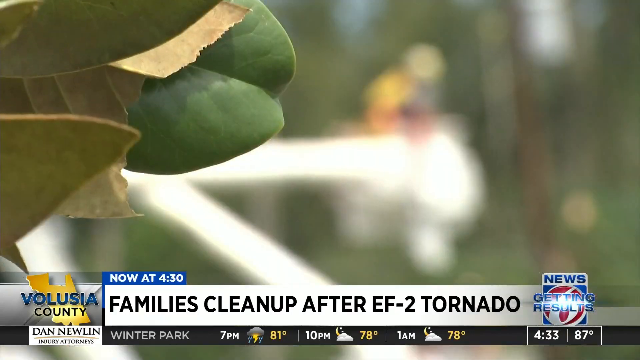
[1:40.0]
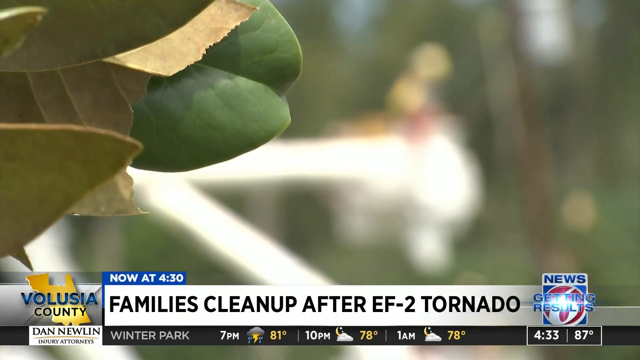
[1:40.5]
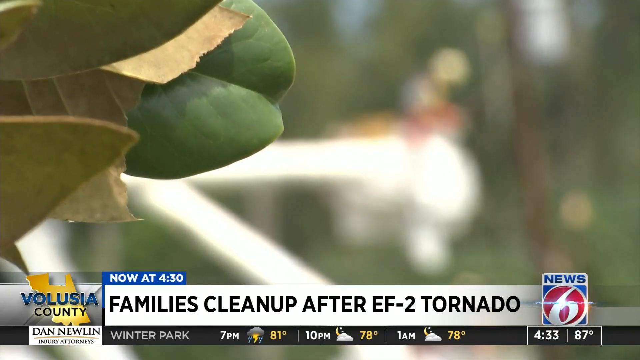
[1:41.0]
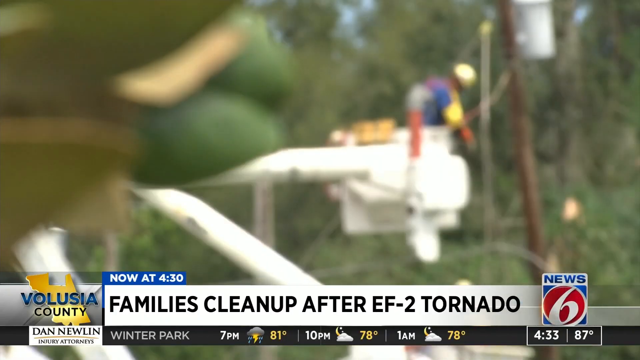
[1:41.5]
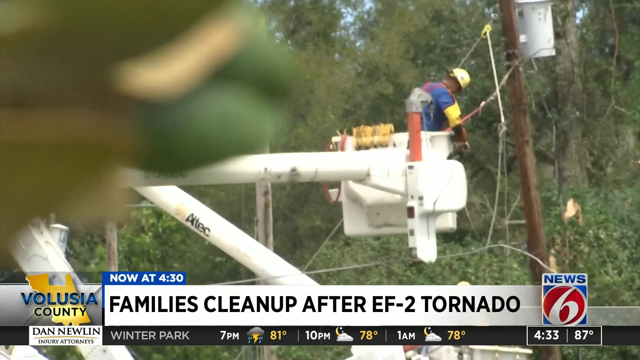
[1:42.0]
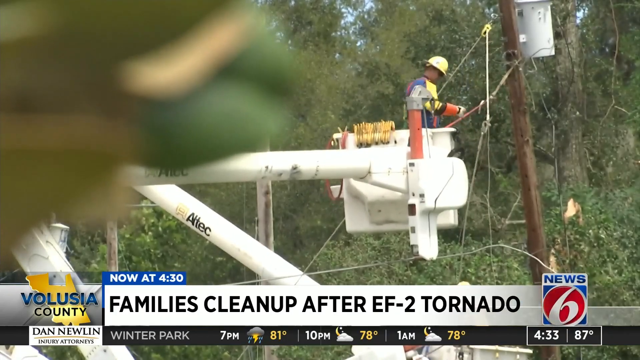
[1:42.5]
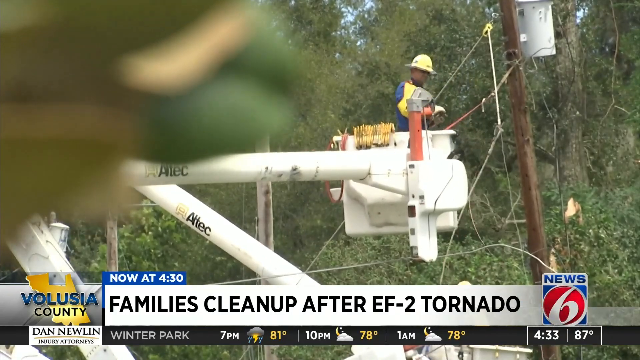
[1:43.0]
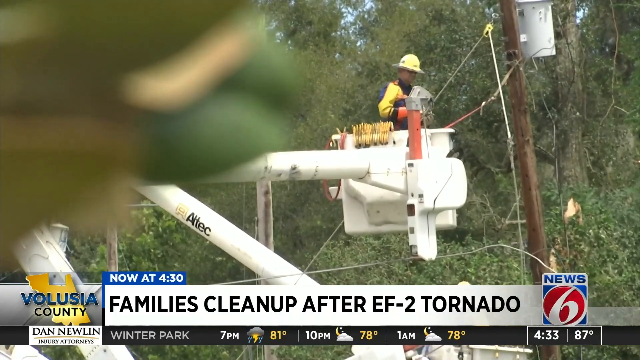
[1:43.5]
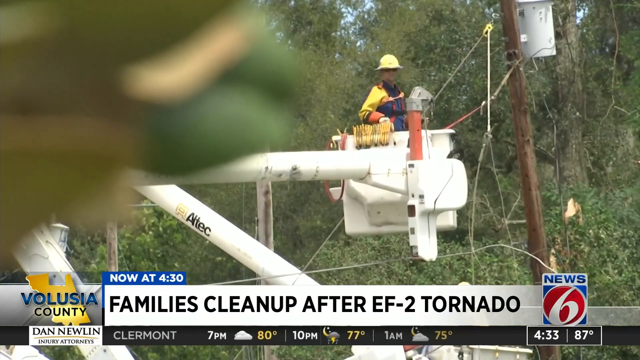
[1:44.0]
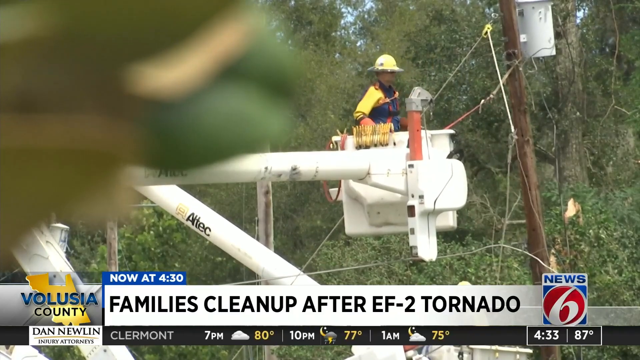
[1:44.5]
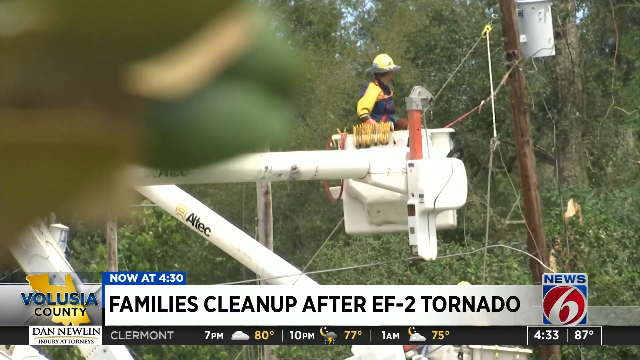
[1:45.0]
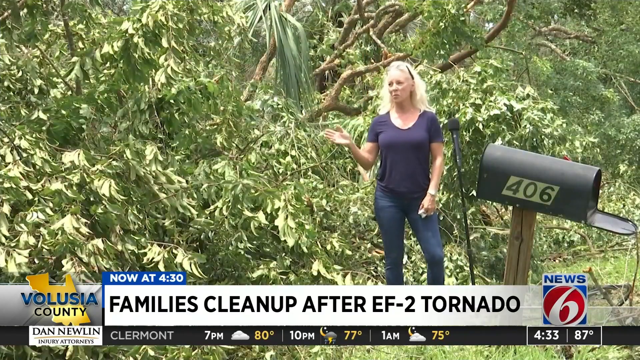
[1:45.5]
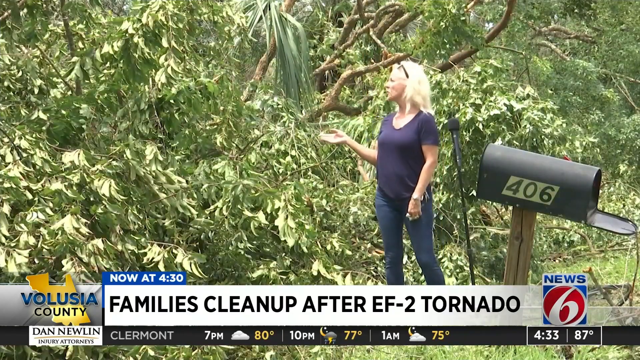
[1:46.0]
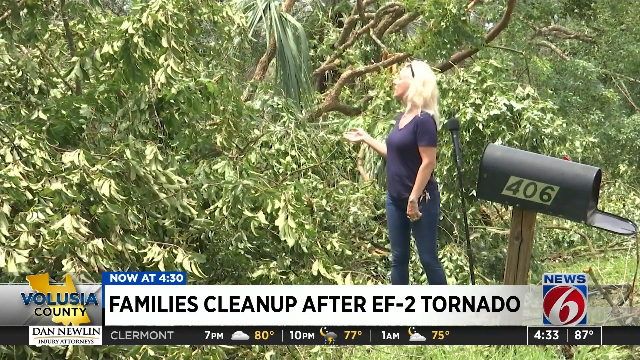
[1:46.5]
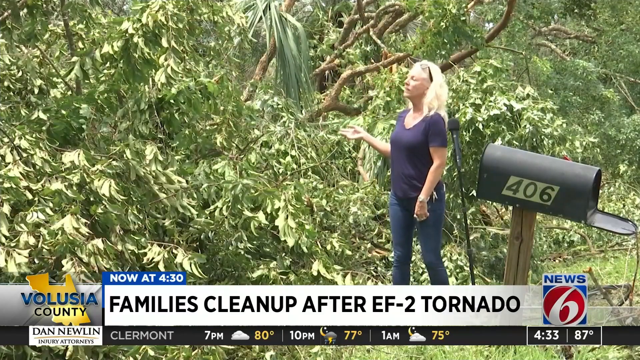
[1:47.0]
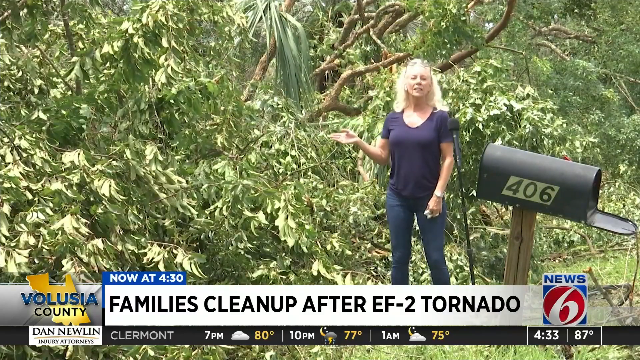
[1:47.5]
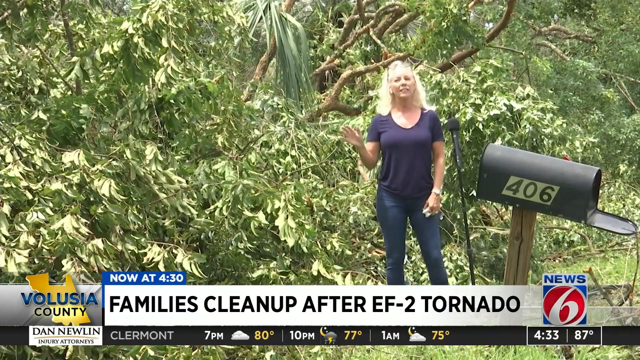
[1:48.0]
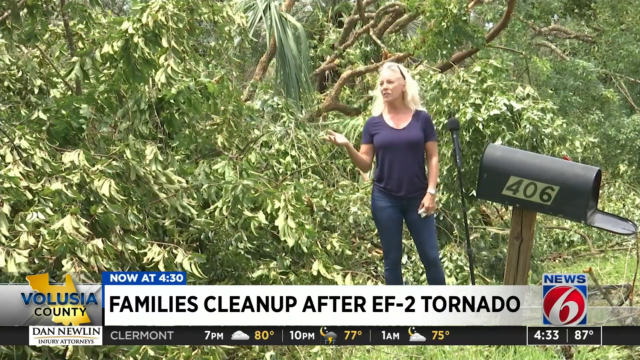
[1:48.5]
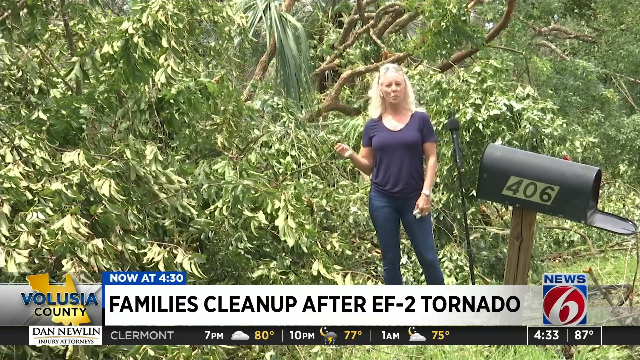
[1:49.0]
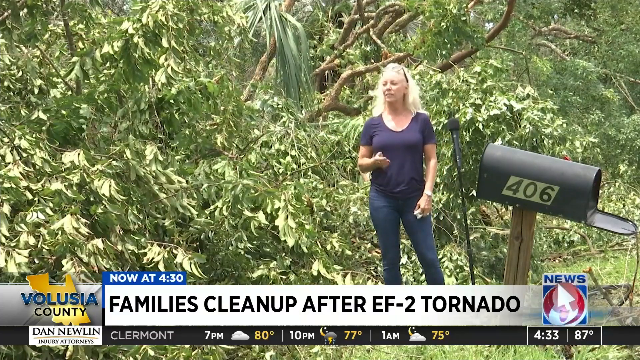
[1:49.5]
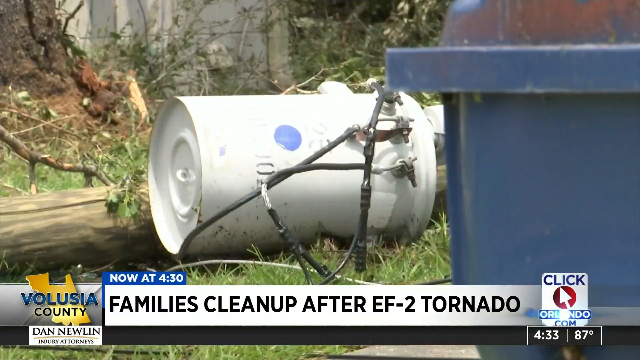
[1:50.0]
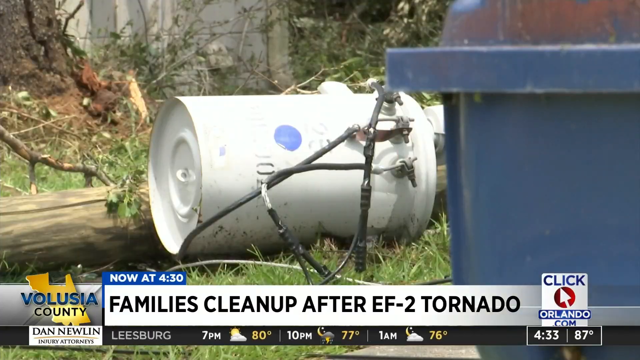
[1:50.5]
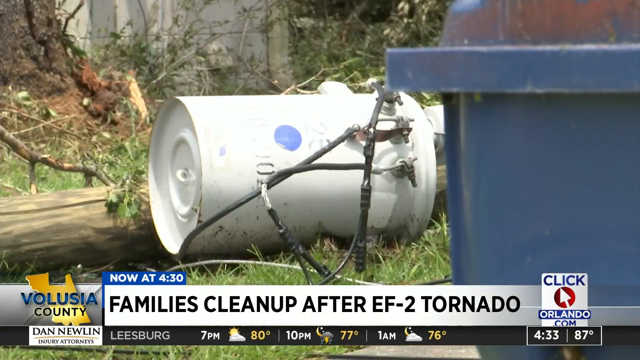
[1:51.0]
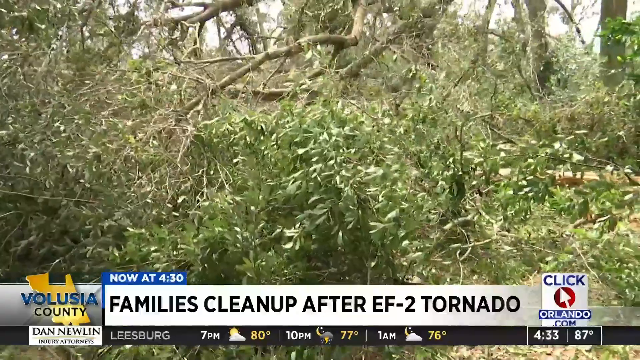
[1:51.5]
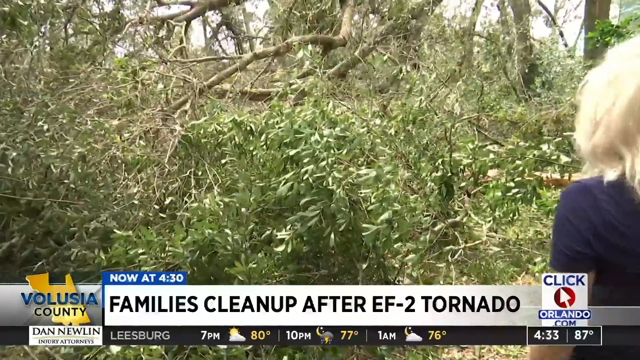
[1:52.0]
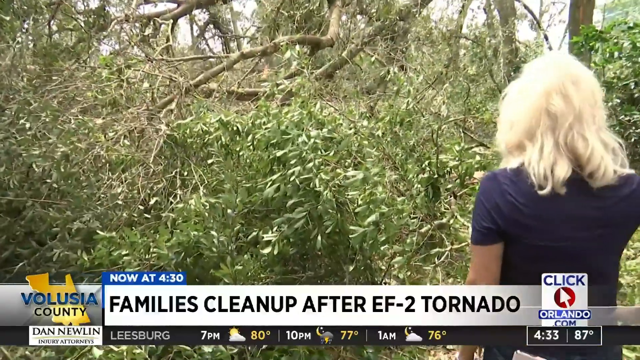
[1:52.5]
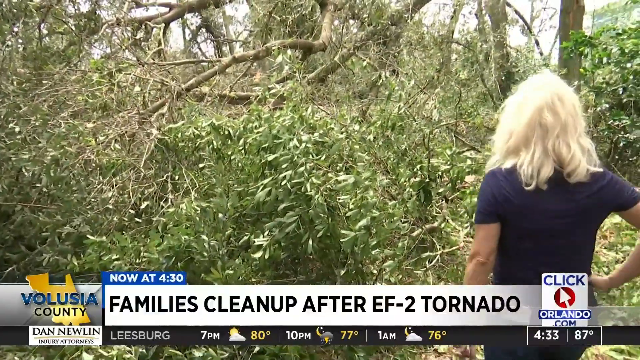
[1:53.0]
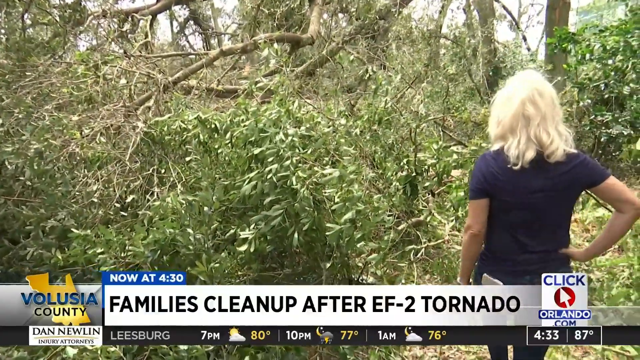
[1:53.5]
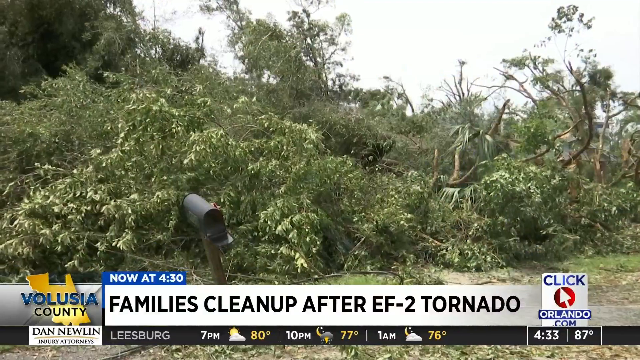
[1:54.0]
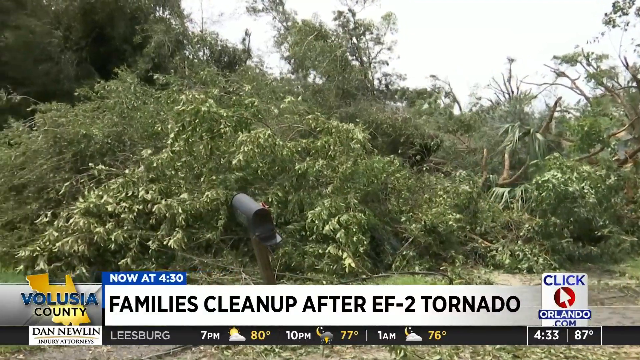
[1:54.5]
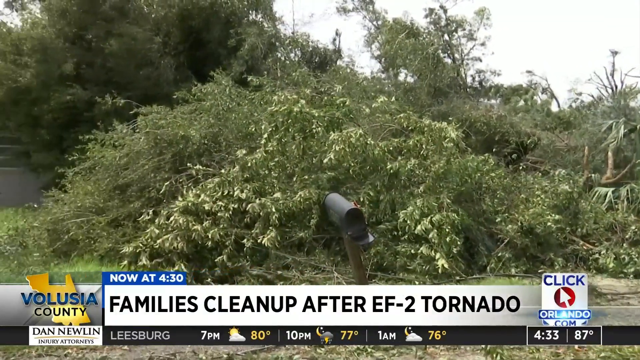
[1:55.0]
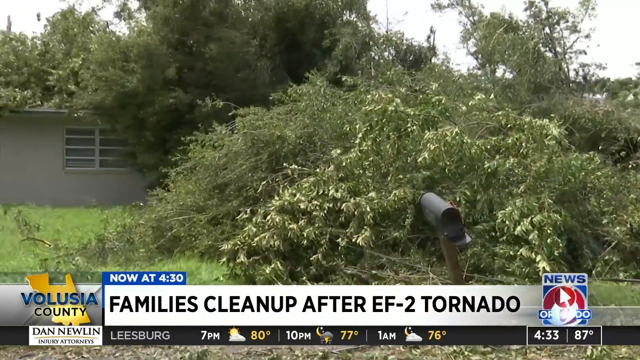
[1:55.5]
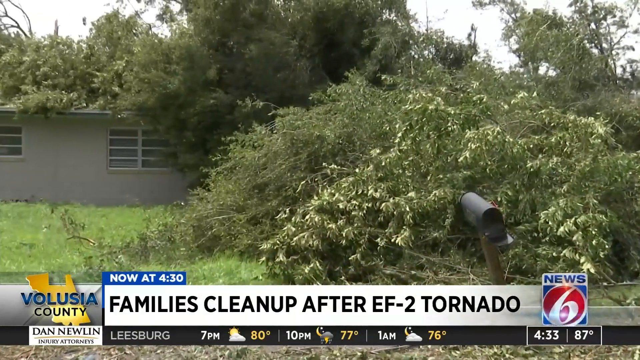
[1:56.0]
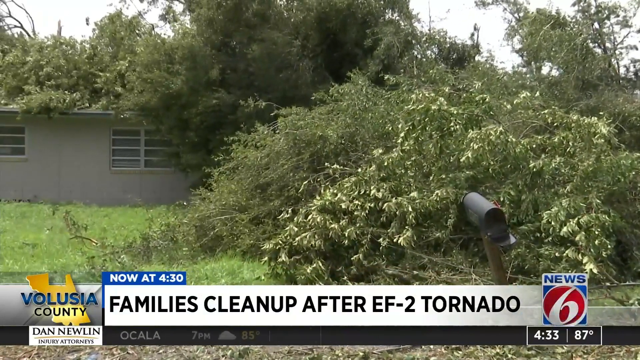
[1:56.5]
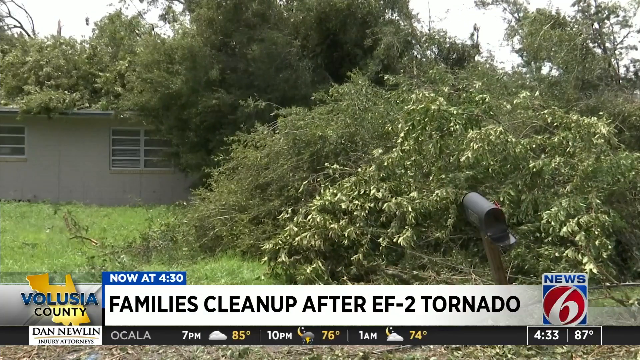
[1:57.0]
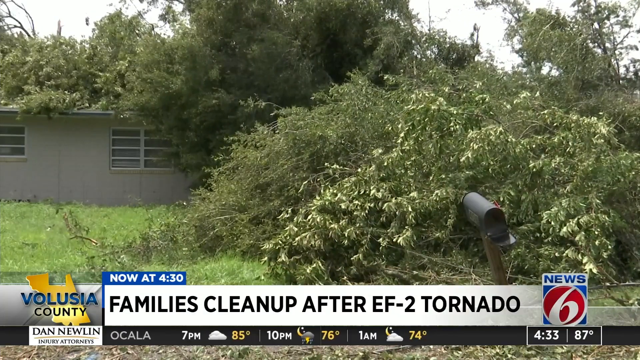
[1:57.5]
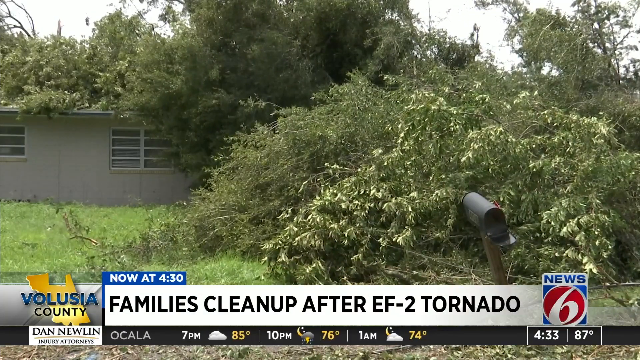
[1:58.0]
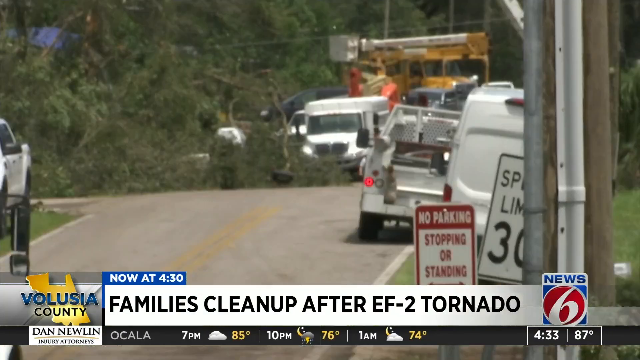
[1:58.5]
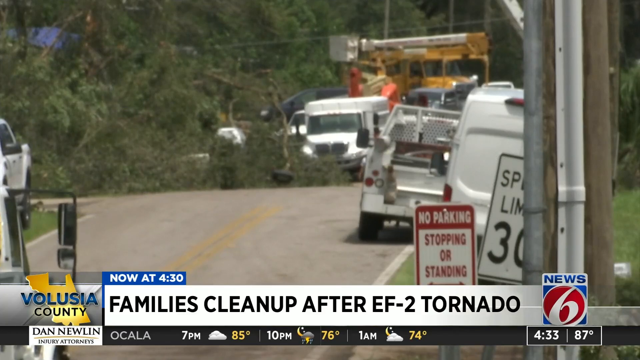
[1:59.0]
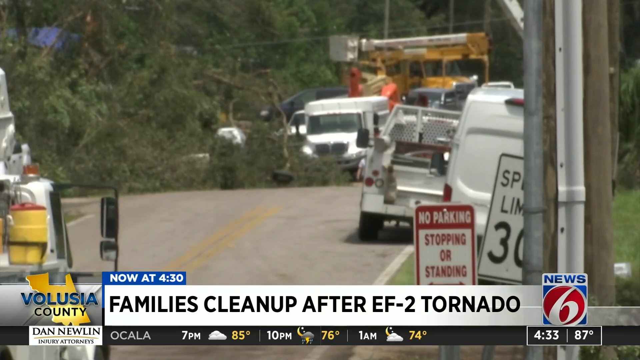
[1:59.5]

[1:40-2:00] The report is apparently from Volusia County, from News Channel 6 or 5. The text "get your results" appears. In front of a blurry background, an in-focus leaf bounces around. A man wearing a hat works on a power line and on a pole. A woman with mailbox number 406, wearing a purple shirt and blue jeans, looks around at the trees and damage around her and walks through her property. A bunch of trees are down, and trees have fallen on a house. The mailbox is open. Emergency crews come in. There is a no parking sign, power lines are down everywhere, and what looks like a transformer lies on the ground.